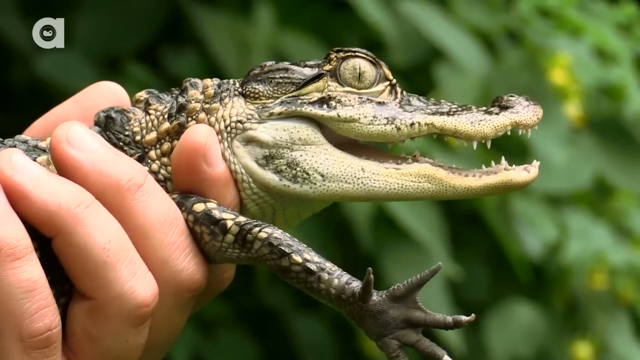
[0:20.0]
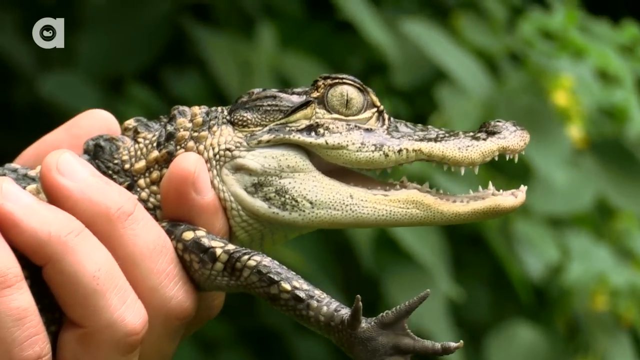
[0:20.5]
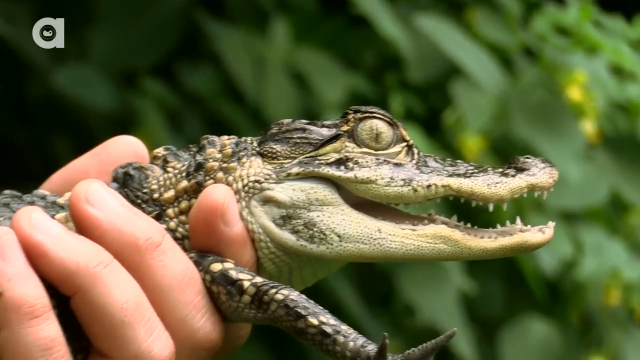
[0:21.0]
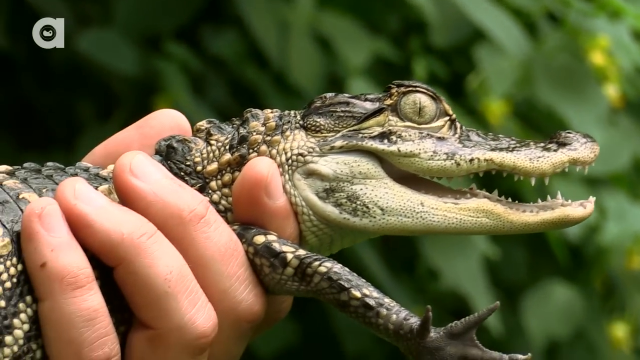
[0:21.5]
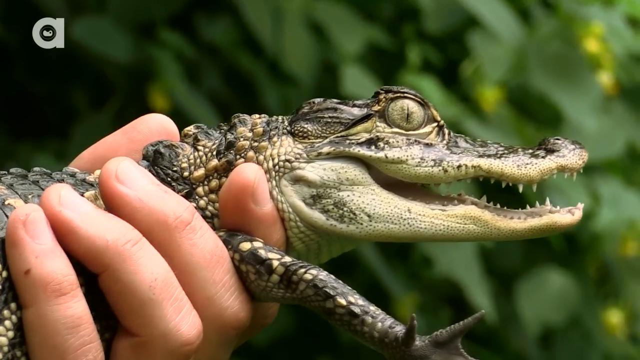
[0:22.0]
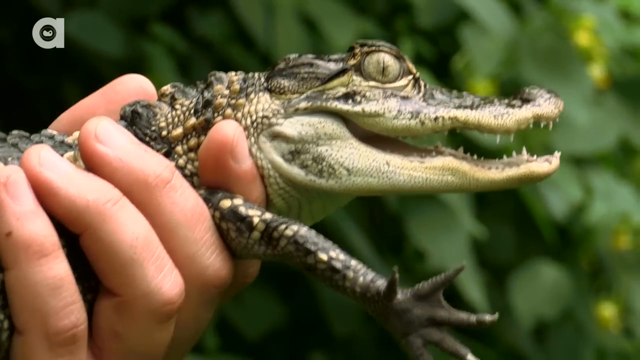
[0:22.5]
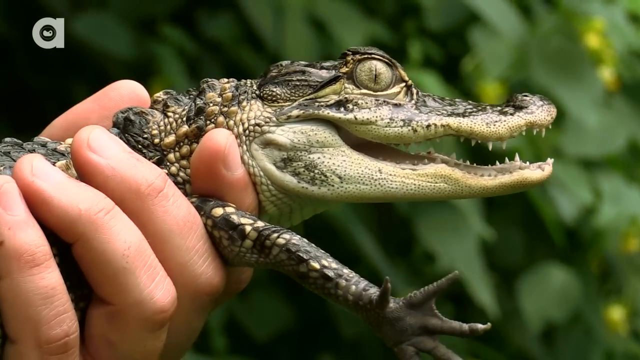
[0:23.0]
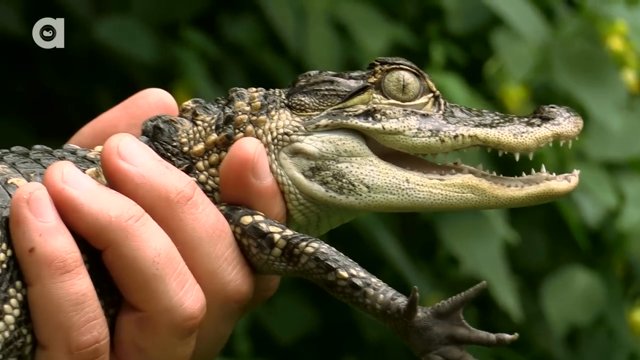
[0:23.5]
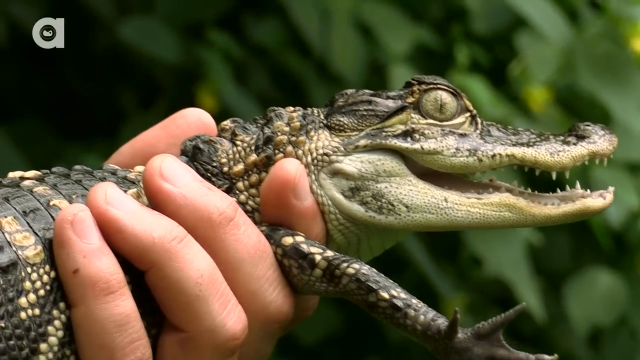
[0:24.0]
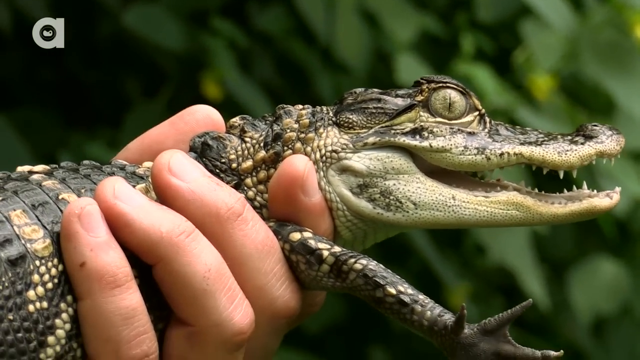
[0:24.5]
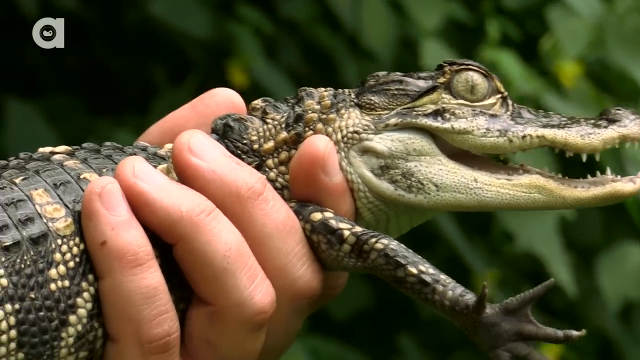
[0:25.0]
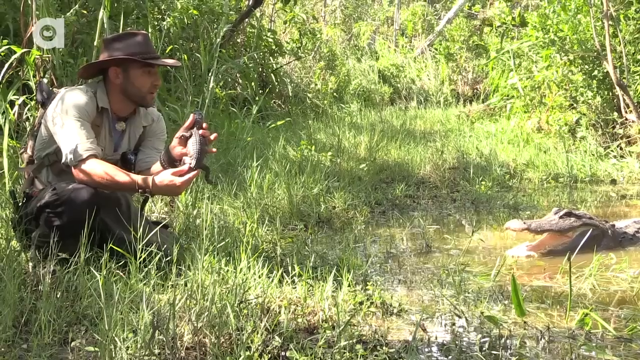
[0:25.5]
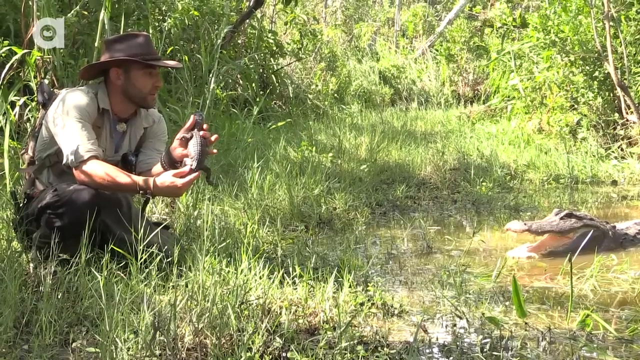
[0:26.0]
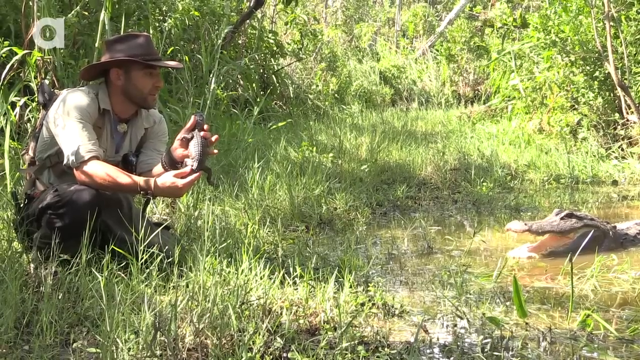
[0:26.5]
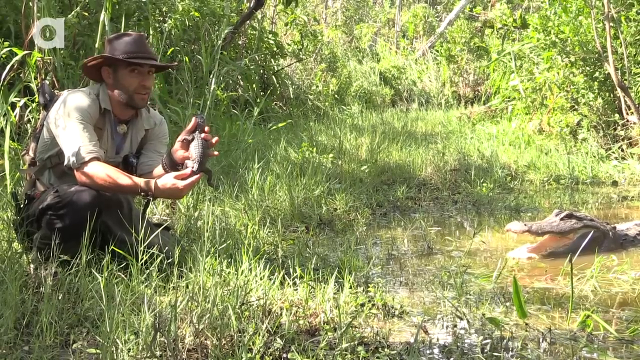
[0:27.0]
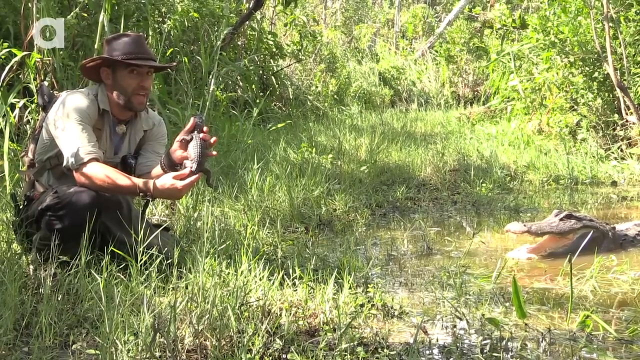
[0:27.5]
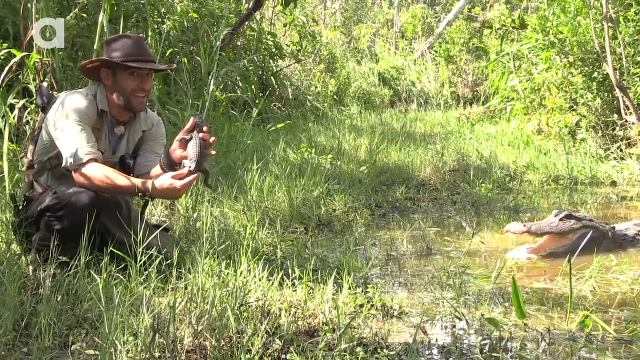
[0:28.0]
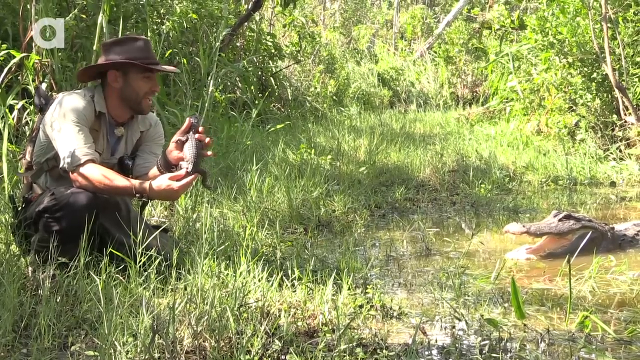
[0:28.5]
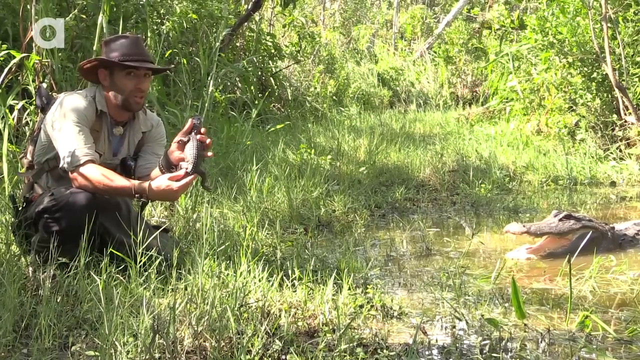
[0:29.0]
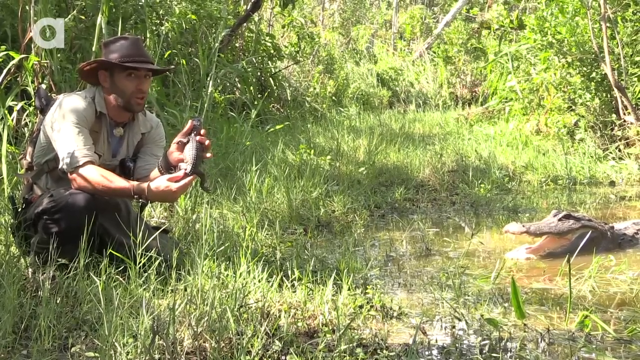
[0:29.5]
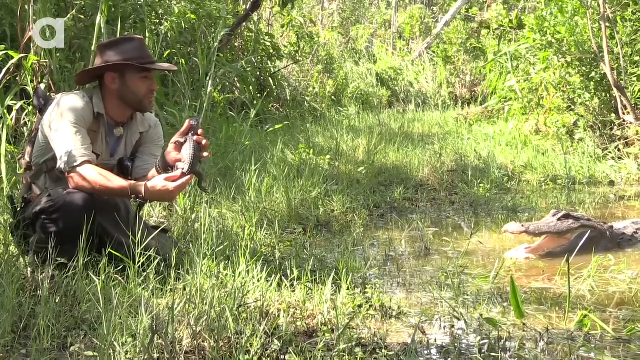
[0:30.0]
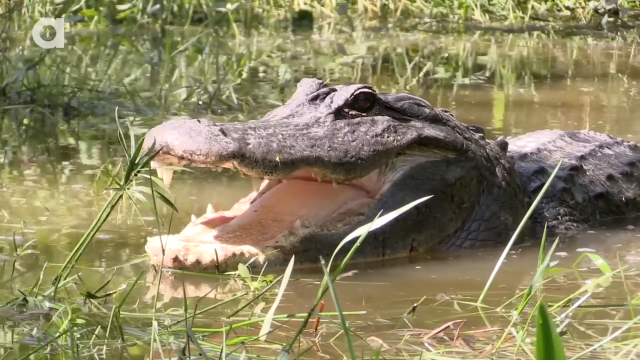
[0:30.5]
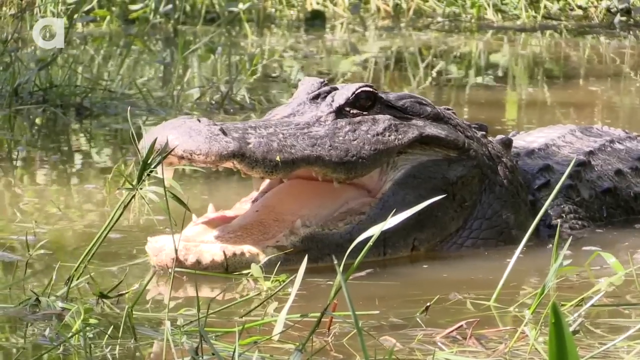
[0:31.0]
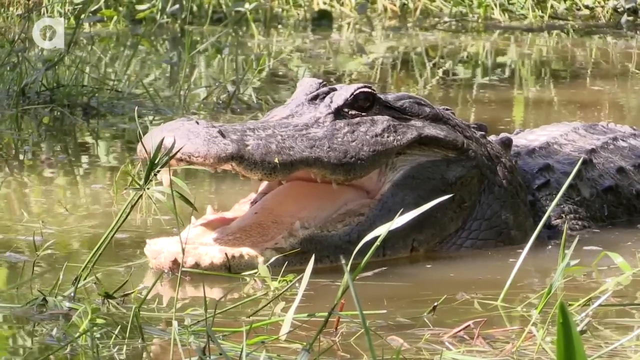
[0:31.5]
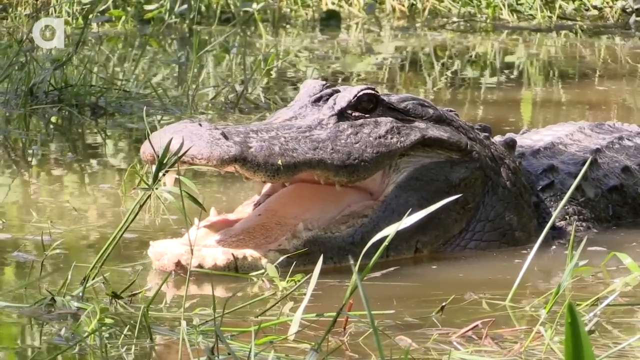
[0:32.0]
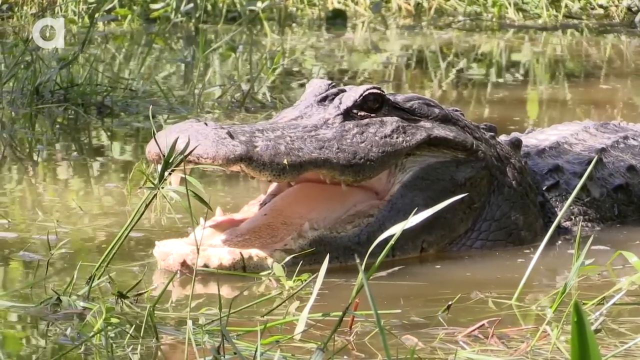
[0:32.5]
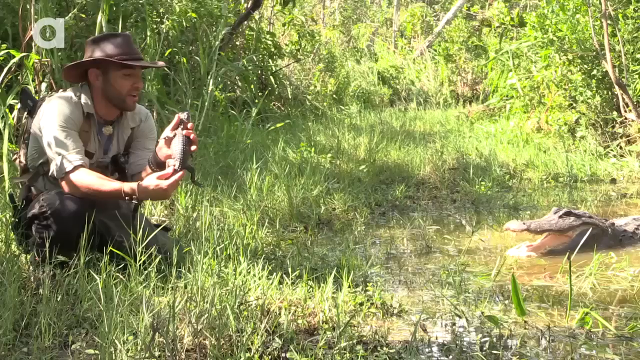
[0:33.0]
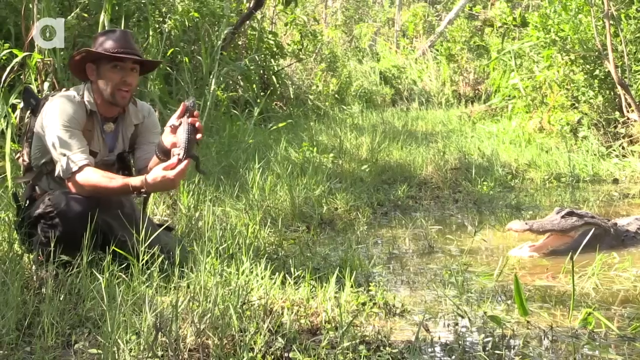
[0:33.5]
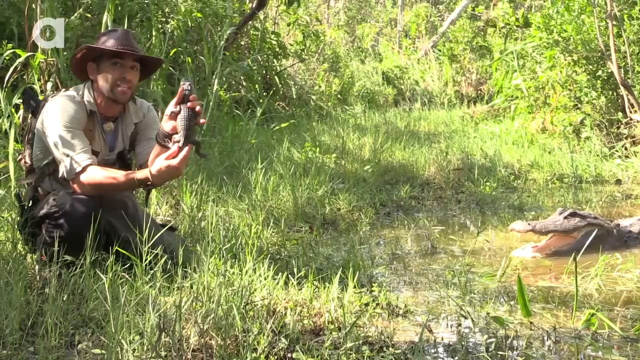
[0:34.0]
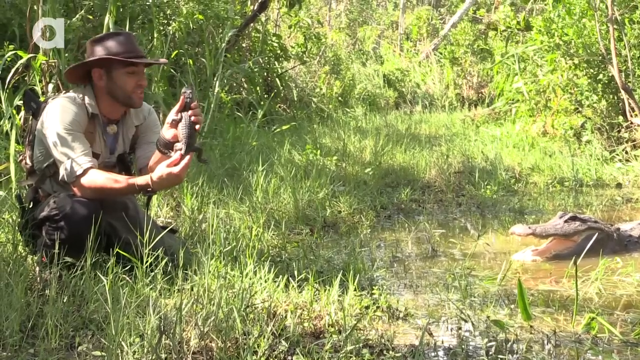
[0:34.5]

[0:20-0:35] A close-up shows the baby alligator. On the left, the man's hand holds it; he is holding it with his left hand, and the baby's right arm is between his first and second finger. The baby's mouth is open, and its eyes look quite scary. It is seen from the side, from its right. The view then switches to a somewhat zoomed-out shot of the man on the left, his head nodding while he talks as he shows the baby alligator's back. On the right, the mother alligator is still in the water with her mouth open. The view switches to a close-up of her face; she looks like she is moving toward the man, still with her mouth open, potentially ready to come get her baby.